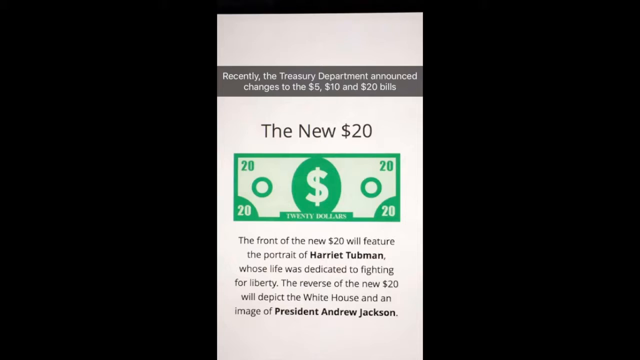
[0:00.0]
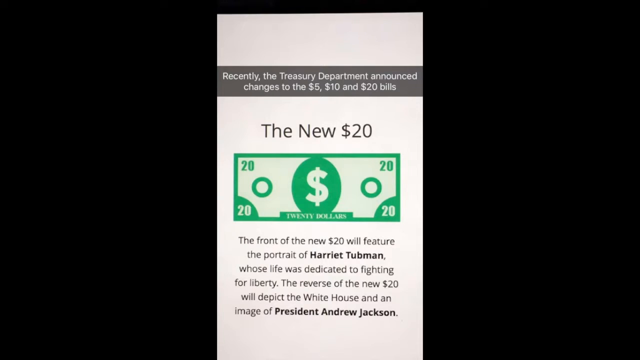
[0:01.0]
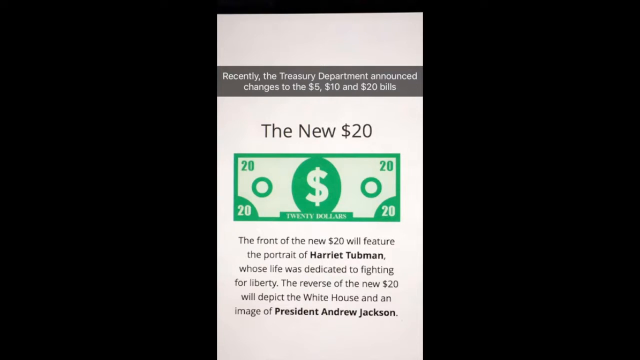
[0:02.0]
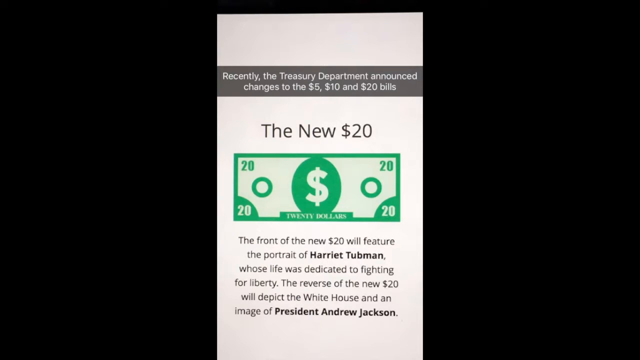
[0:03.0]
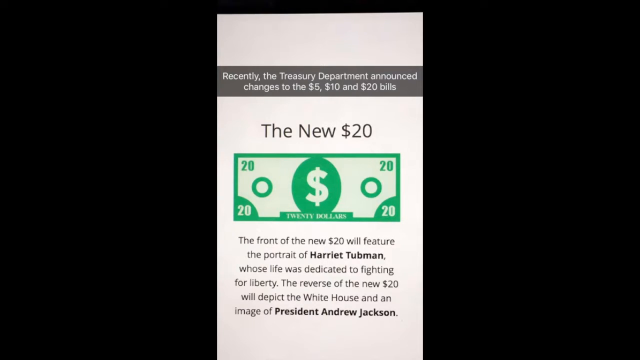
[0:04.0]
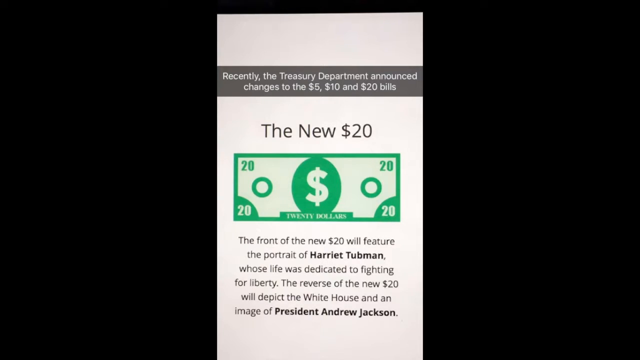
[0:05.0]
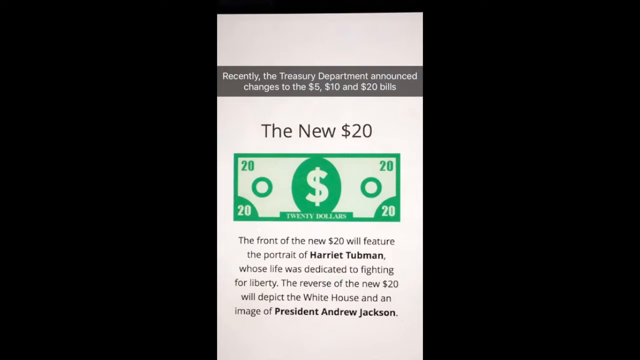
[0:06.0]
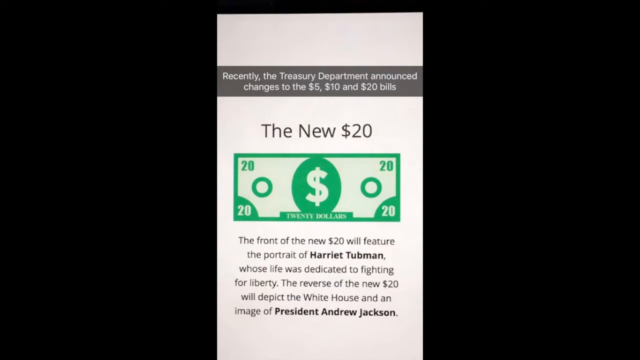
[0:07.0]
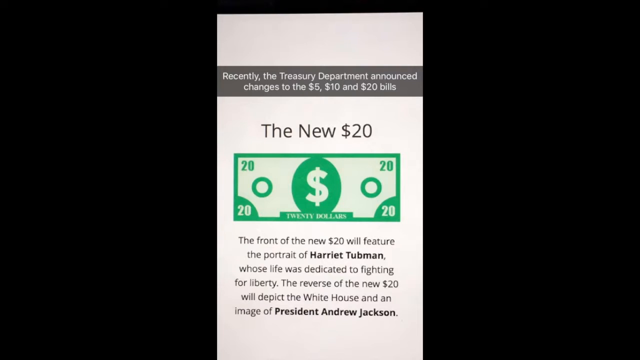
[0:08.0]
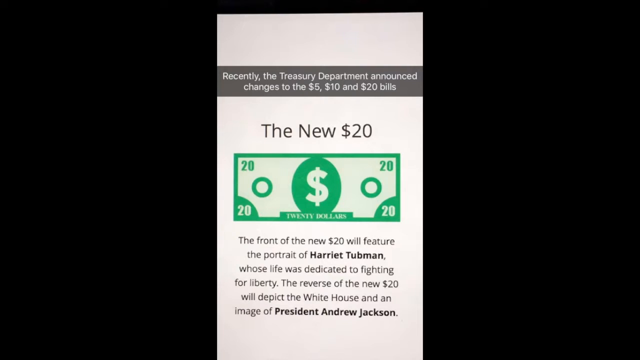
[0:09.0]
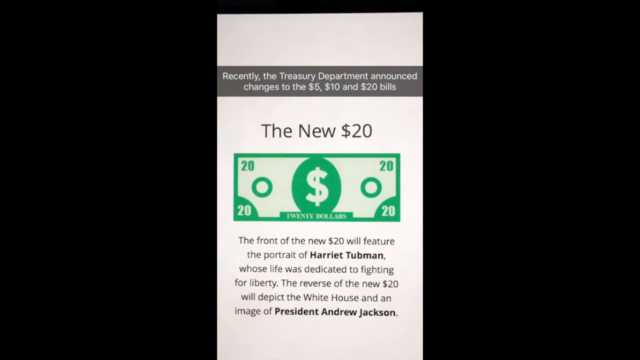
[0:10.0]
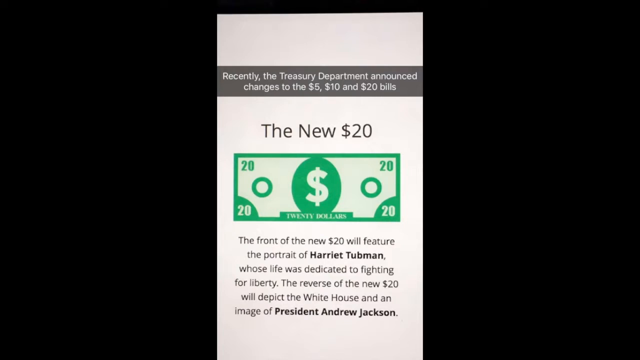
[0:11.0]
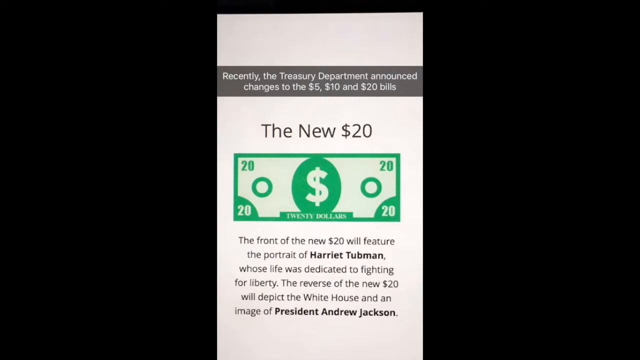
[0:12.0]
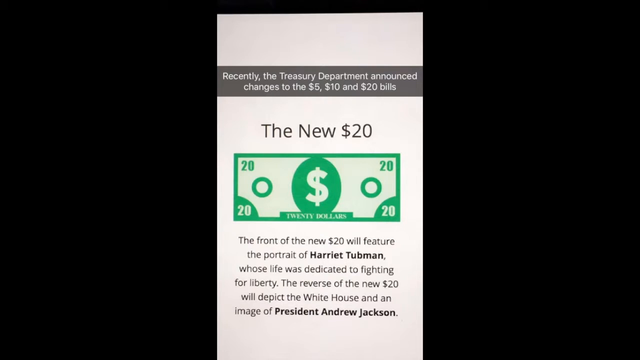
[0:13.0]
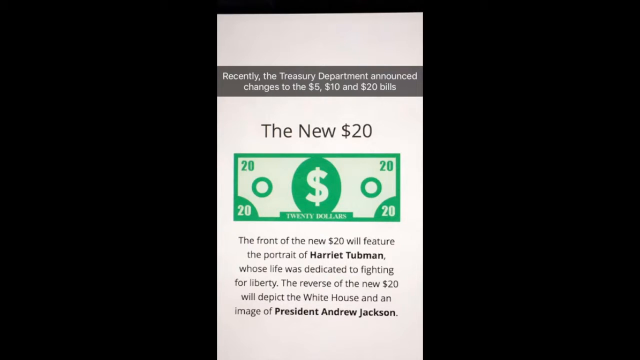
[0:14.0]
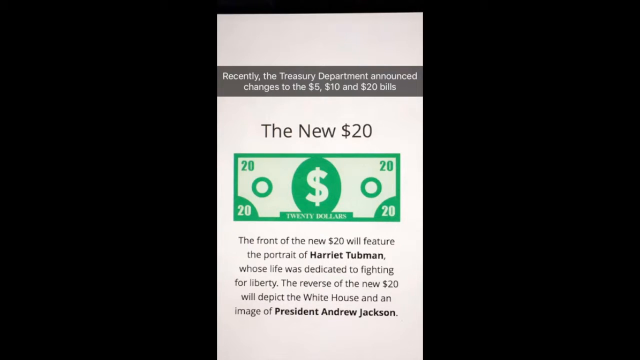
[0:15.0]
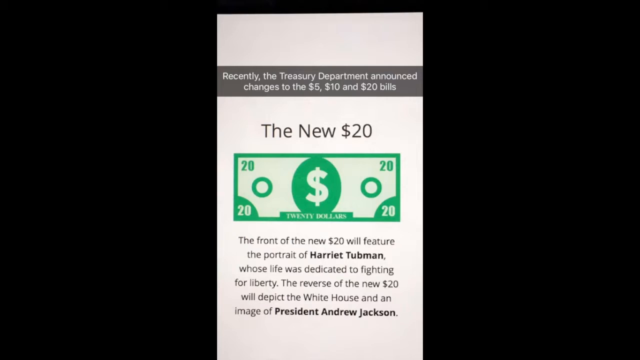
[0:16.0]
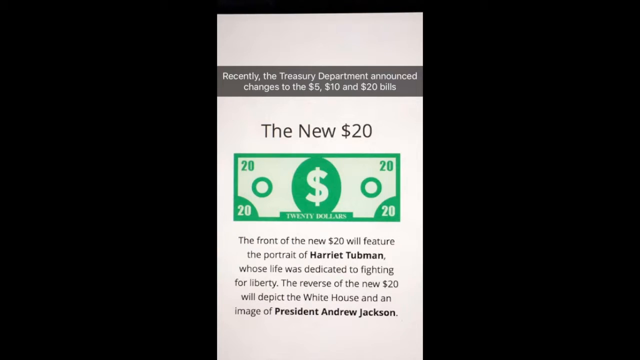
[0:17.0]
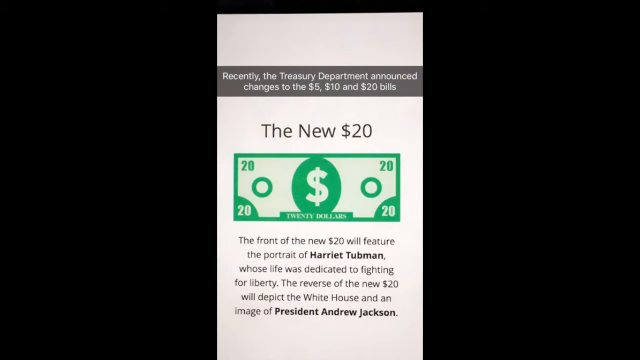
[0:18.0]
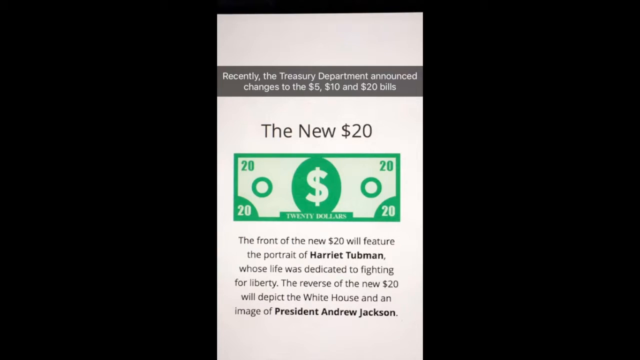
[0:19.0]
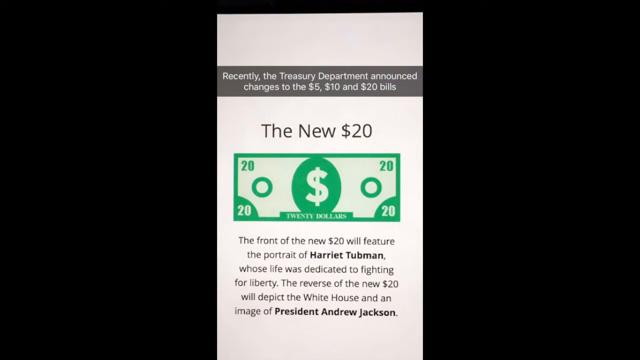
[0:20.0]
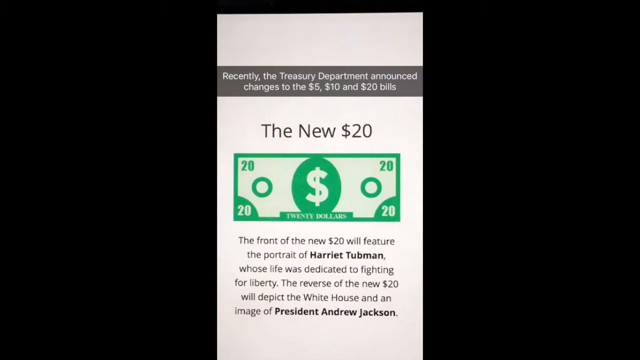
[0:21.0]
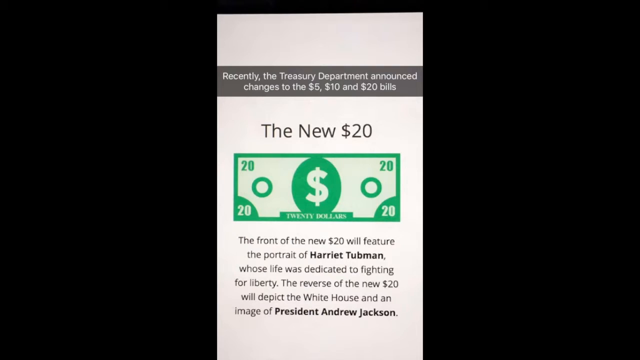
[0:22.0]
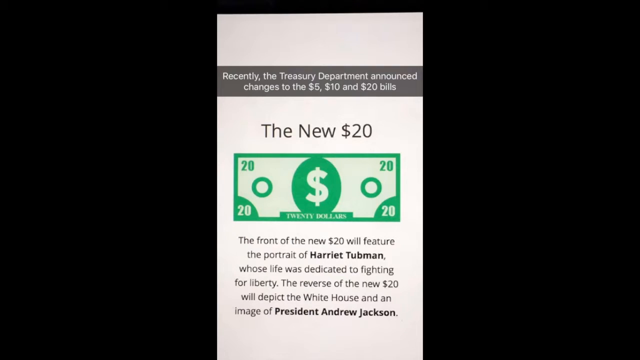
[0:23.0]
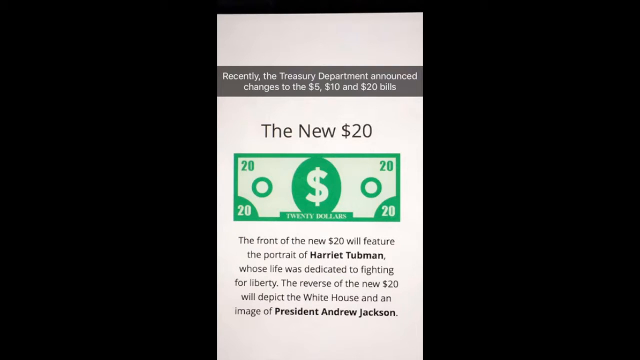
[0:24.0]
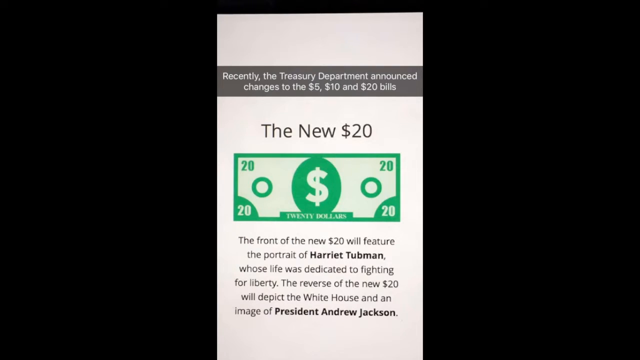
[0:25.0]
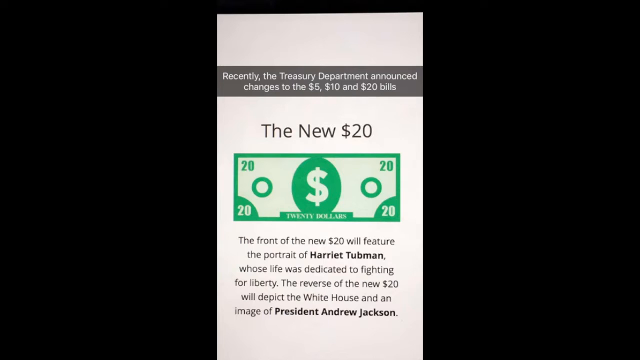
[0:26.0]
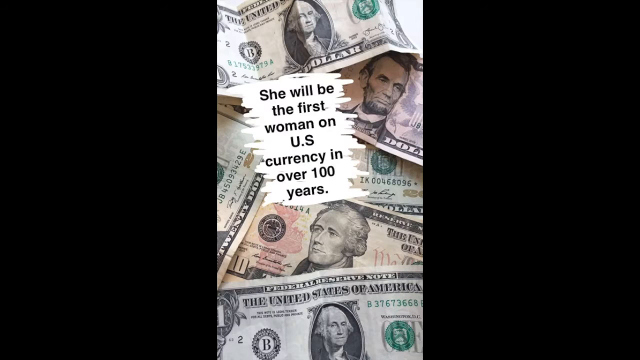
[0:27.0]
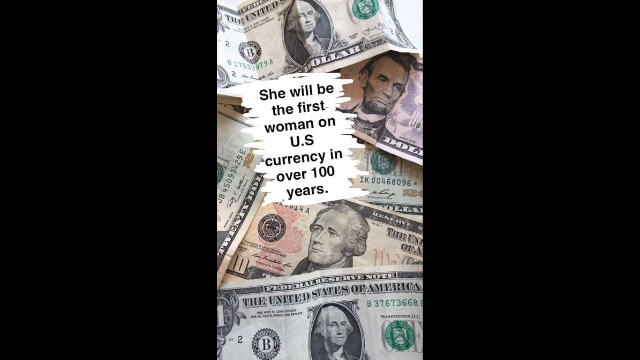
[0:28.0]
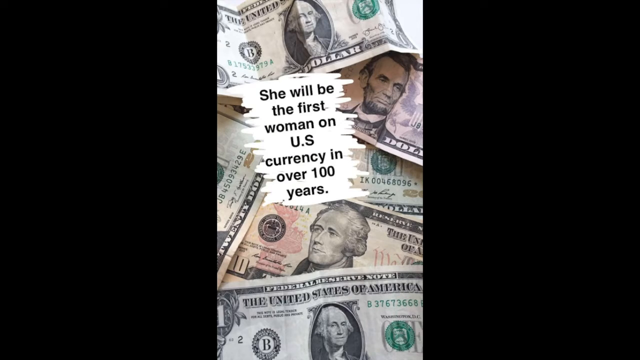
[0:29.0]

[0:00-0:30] A news piece is shown on a vertical screen. A gray bar runs across the screen near the top and reads "recently the Treasury Department announced changes to the $5 $10 and $20 bills." Below it is more text on a white background, with a dollar sign between some of the text. Above a picture of a $20 bill are the words "the new $20." The bill is a simple rendition with no face: it shows 20 in the corners, green circles on the sides with a lighter background, and a green circle in the center with the money symbol inside it. The text below reads "the front of the new $20 will feature the portrait of Harriet Tubman, whose life was dedicated to fighting for liberty. The reverse of the new $20 will depict the White House and an image of President Andrew Jackson." The image then changes to actual dollar bills, including a one-dollar bill and a five-dollar bill, some of them showing their back sides. White lines, sort of like marker lines, run left and right across them with black text reading "she will be the first woman on U.S. currency in over 100 years."